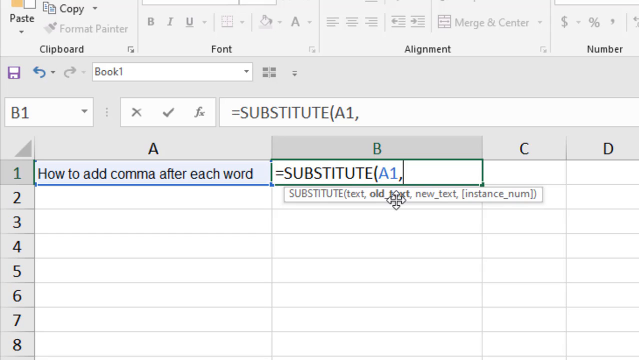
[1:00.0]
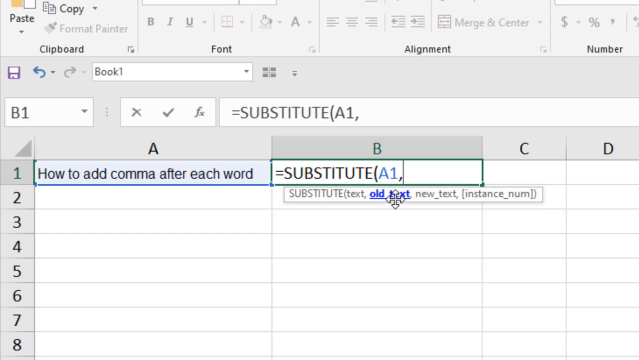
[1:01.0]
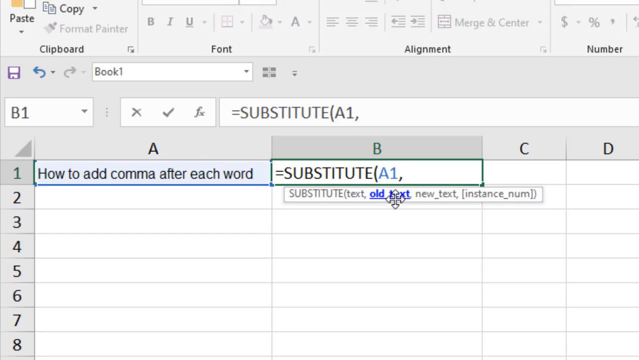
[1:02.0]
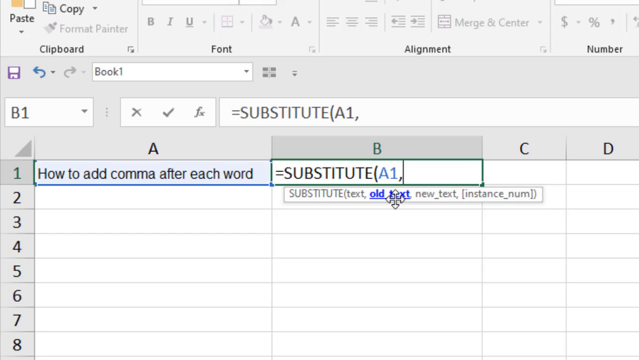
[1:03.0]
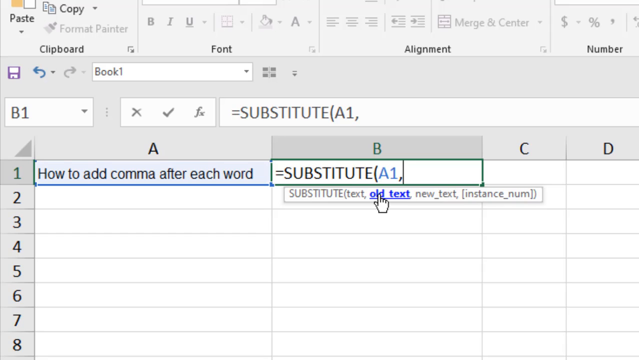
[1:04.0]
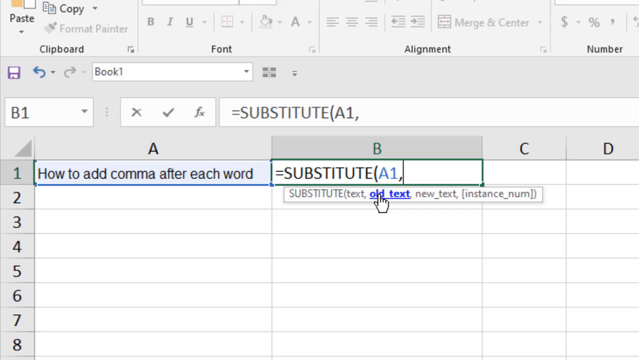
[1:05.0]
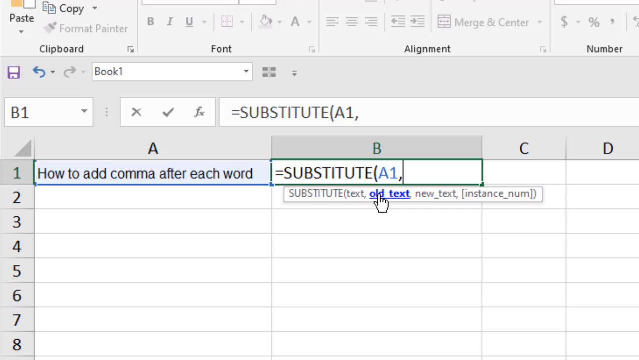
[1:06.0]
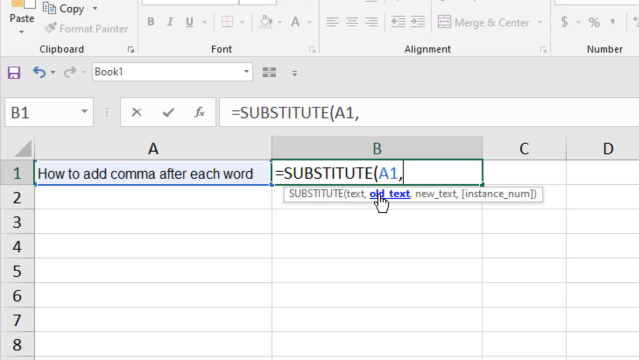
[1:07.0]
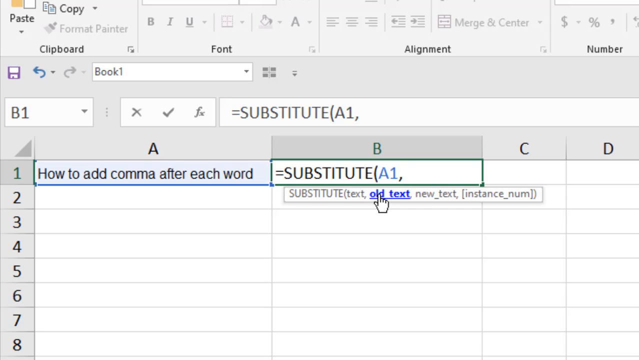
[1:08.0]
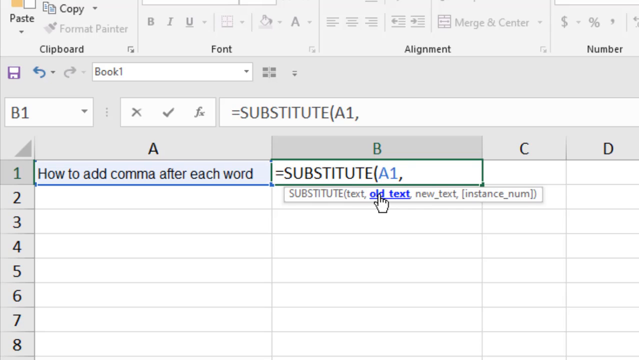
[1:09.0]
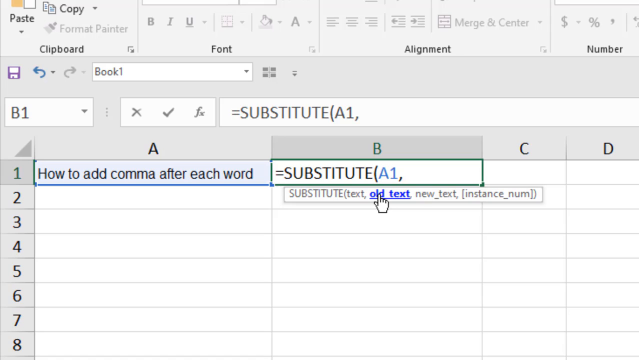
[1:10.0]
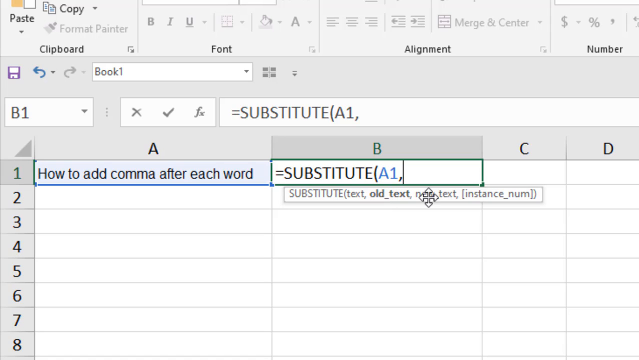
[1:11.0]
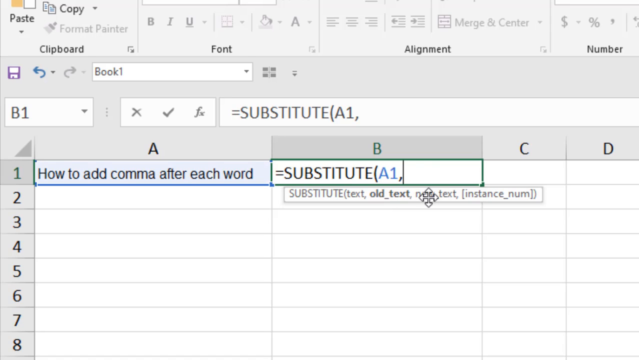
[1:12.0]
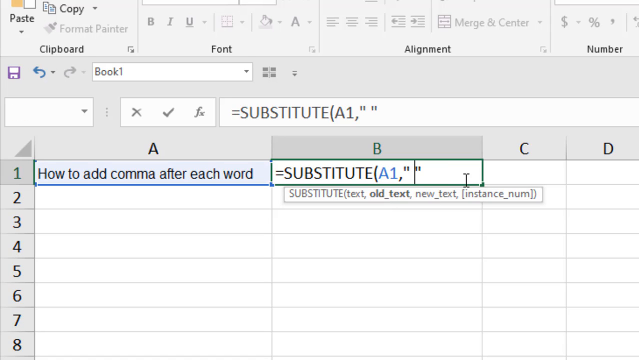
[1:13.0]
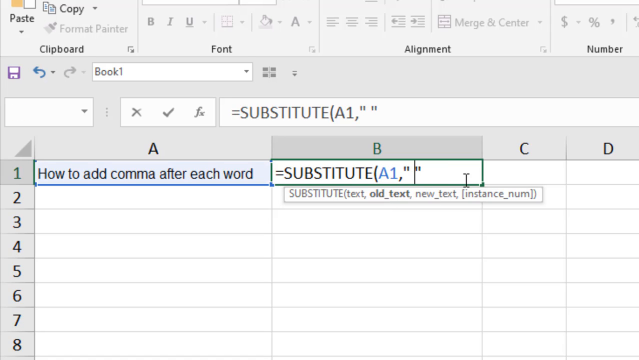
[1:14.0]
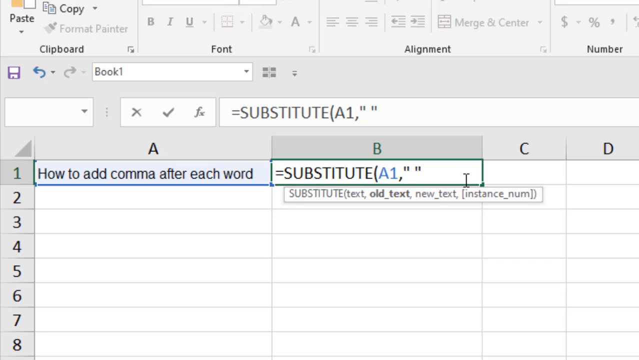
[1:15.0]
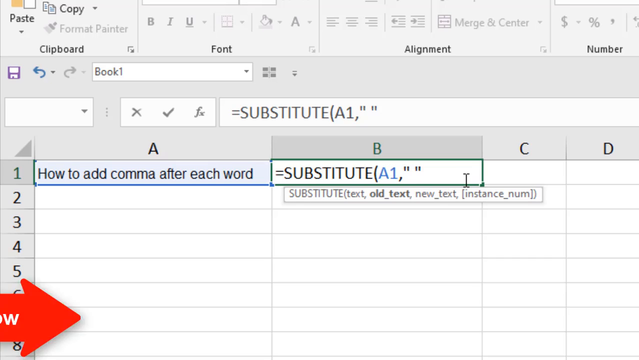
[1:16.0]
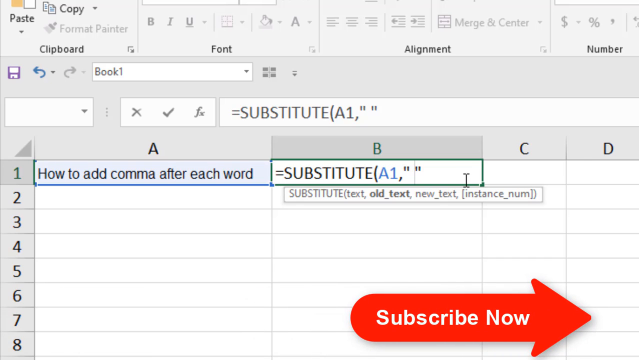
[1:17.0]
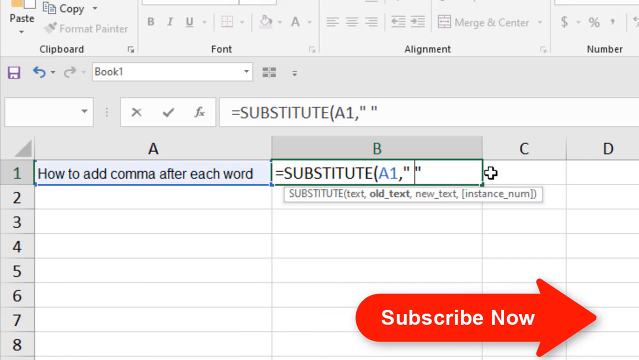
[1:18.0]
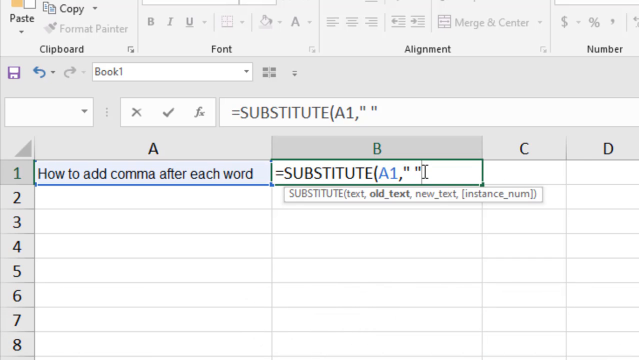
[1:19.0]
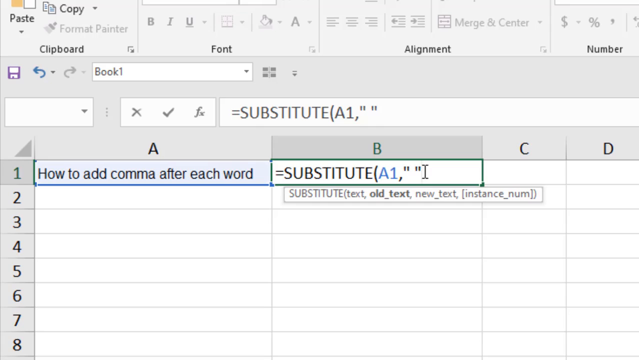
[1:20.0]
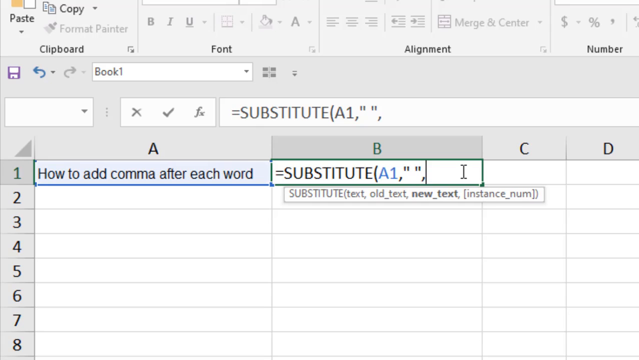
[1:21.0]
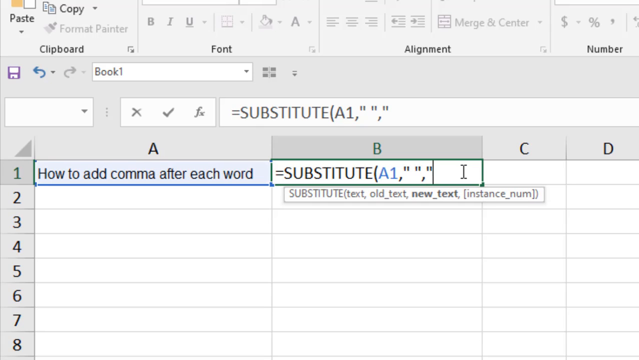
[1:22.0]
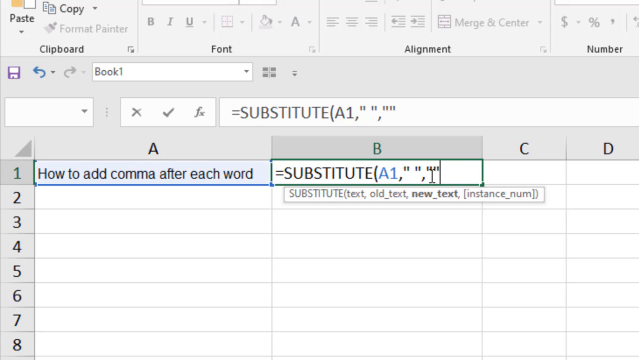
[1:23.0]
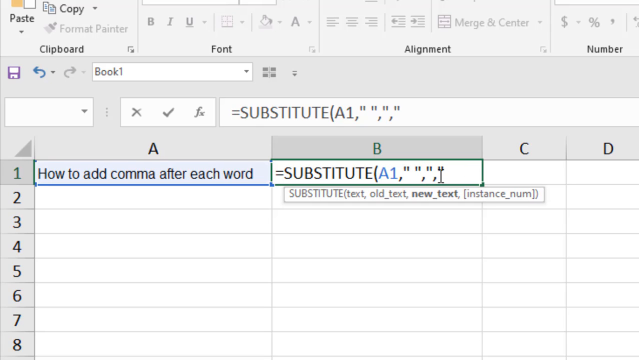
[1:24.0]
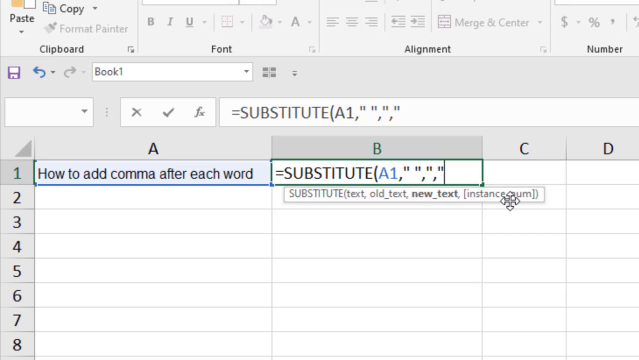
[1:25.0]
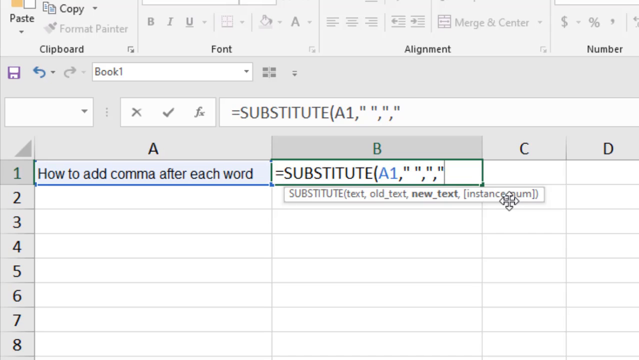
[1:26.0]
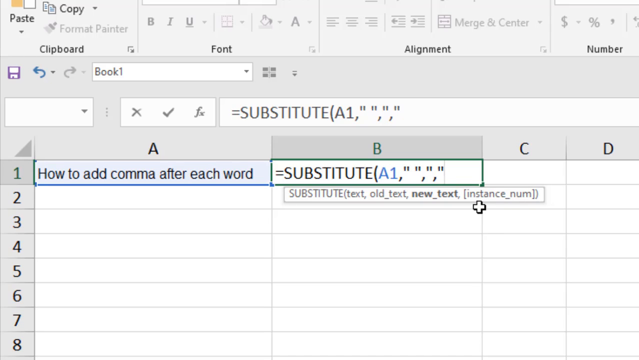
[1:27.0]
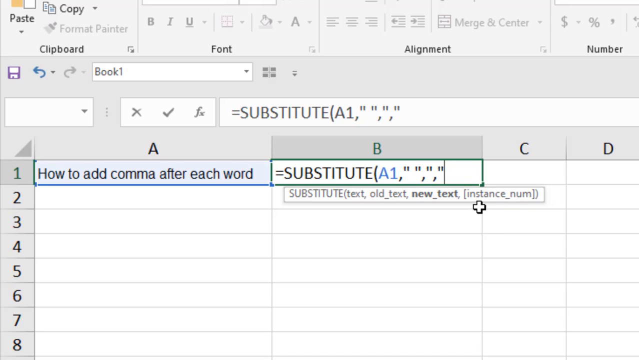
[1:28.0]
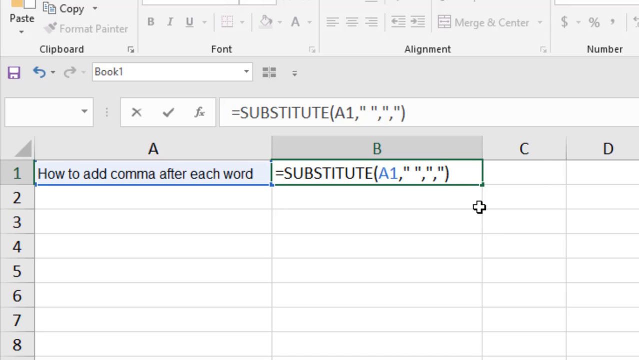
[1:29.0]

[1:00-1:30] In the Excel spreadsheet, row one of column B is highlighted, and the entry so far reads "=substitute(A1,". Underneath, a hint reading "substitute text, old text, new text" appears with "old text" highlighted, and it has a link. The person then adds open and close parentheses with nothing between them, another comma, then open and close parentheses with a comma between them, and then a close parenthesis. The menus listed underneath show instructions and options.